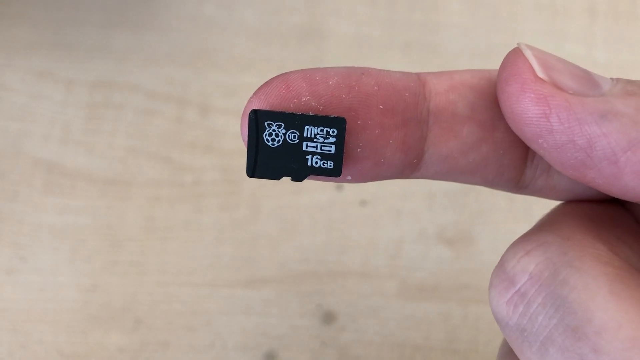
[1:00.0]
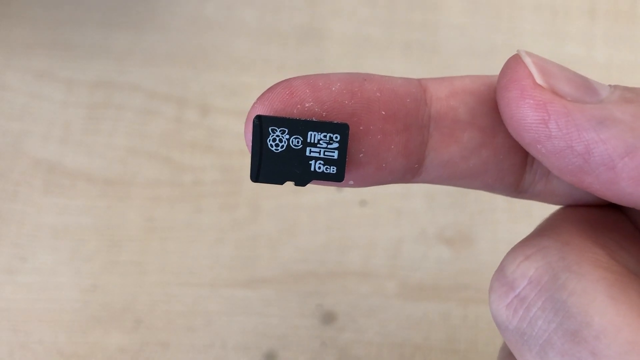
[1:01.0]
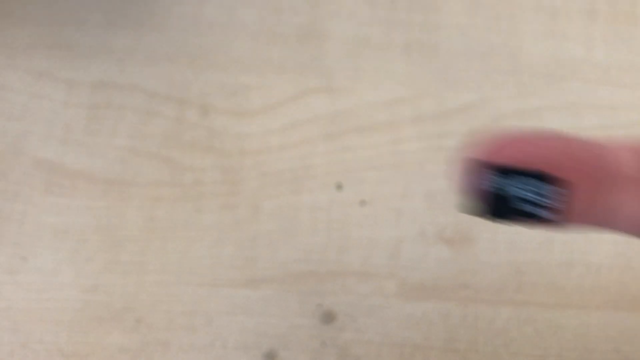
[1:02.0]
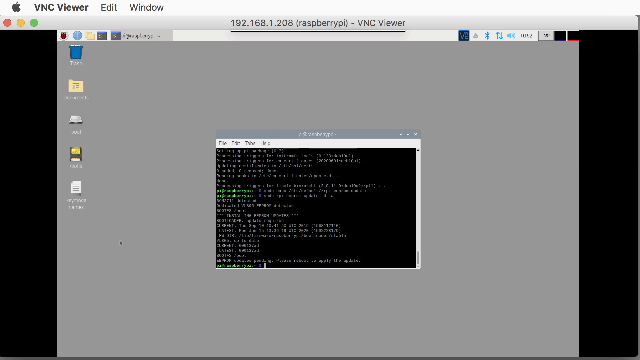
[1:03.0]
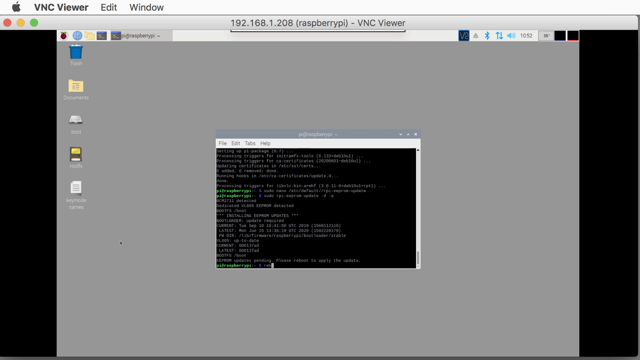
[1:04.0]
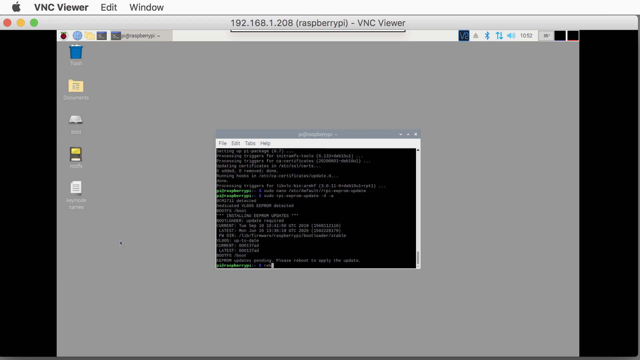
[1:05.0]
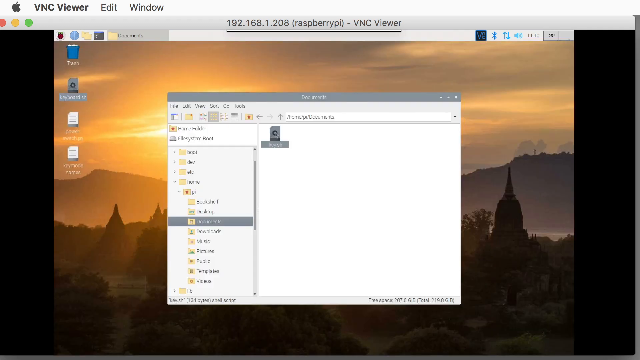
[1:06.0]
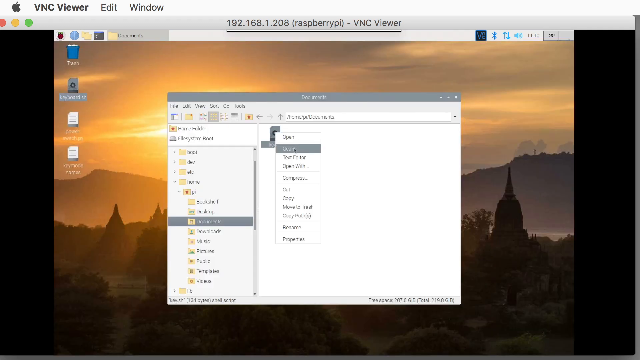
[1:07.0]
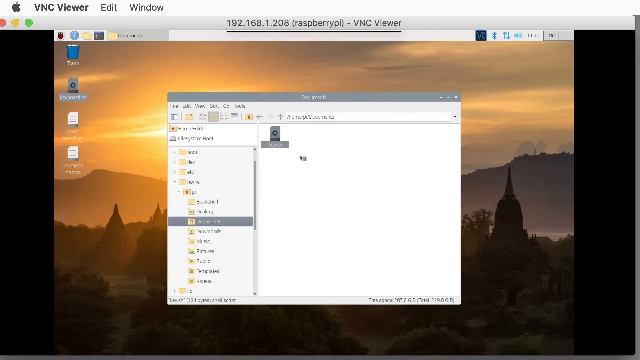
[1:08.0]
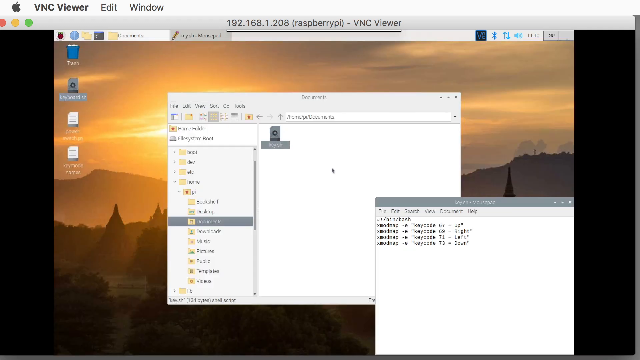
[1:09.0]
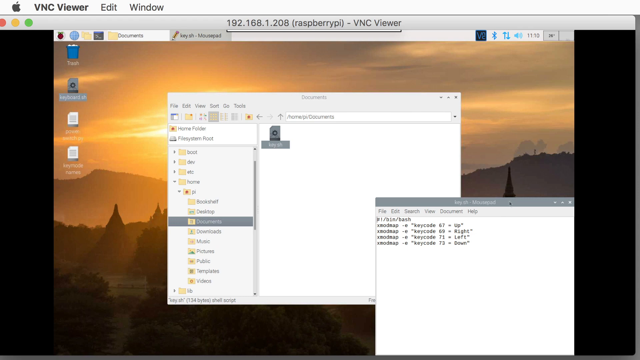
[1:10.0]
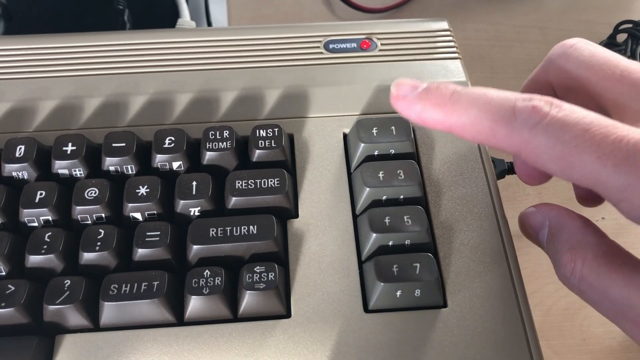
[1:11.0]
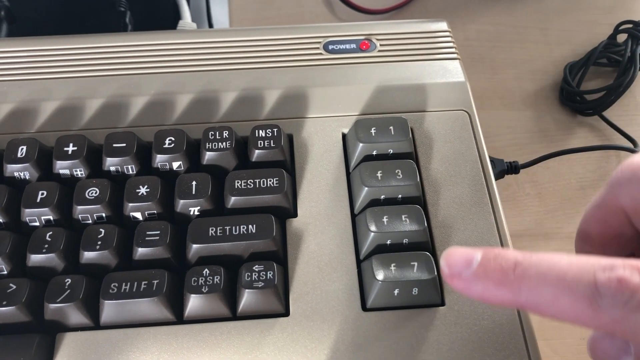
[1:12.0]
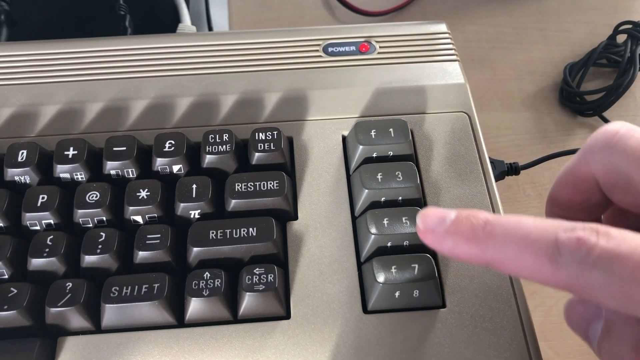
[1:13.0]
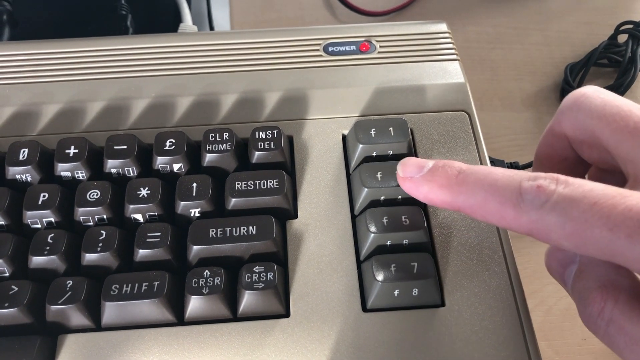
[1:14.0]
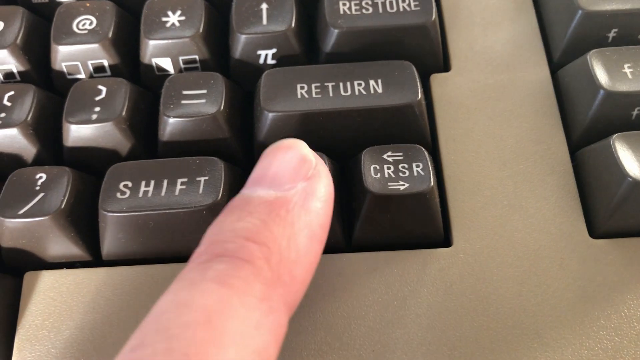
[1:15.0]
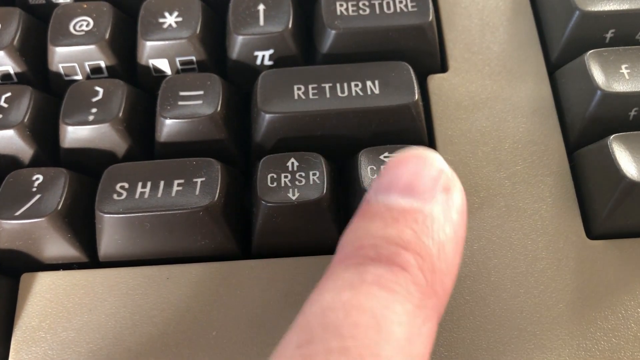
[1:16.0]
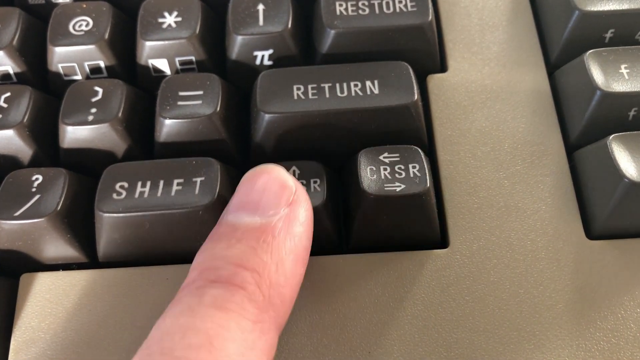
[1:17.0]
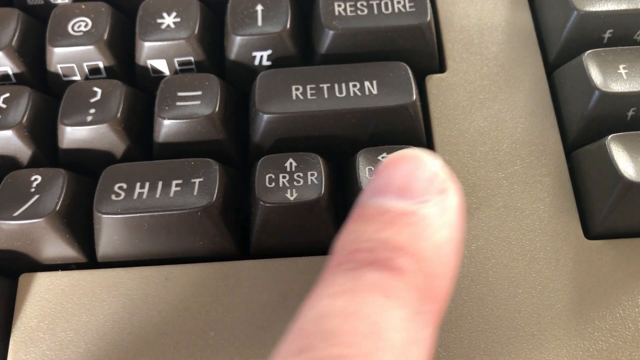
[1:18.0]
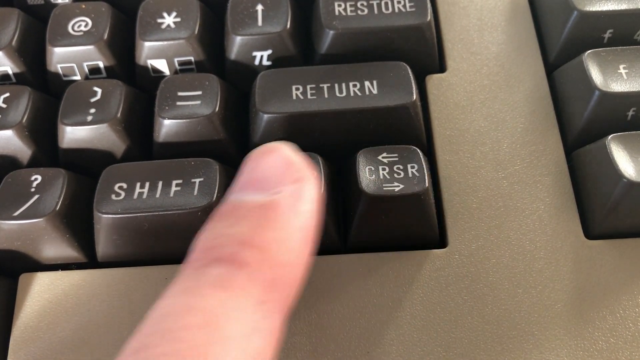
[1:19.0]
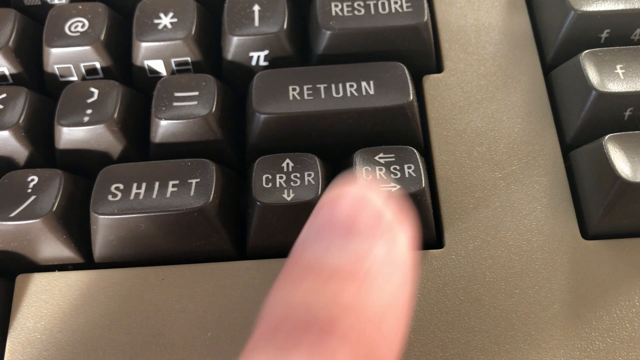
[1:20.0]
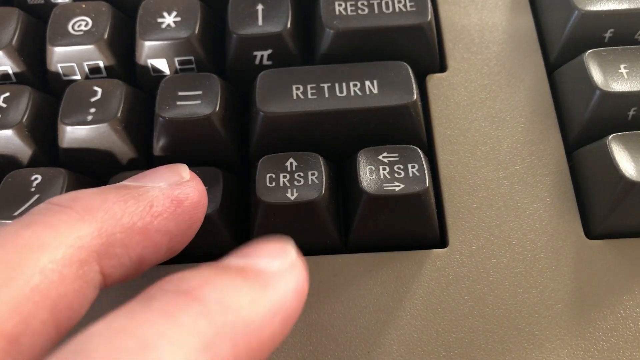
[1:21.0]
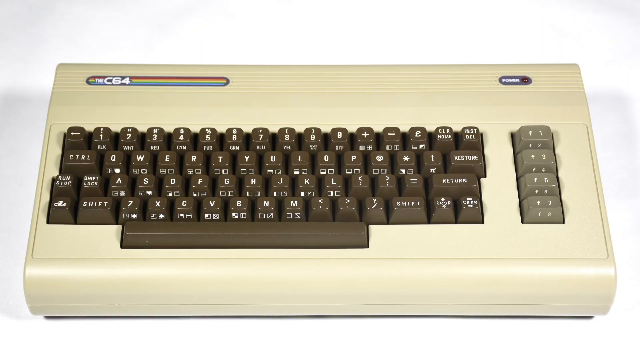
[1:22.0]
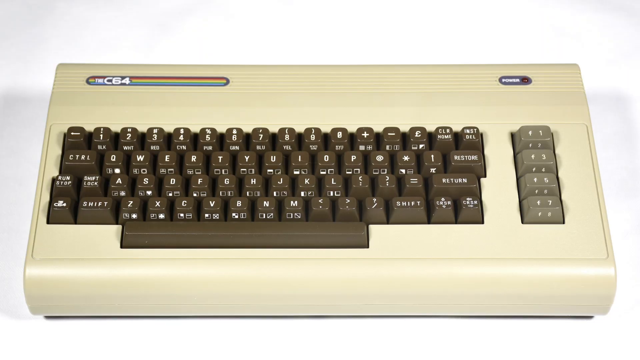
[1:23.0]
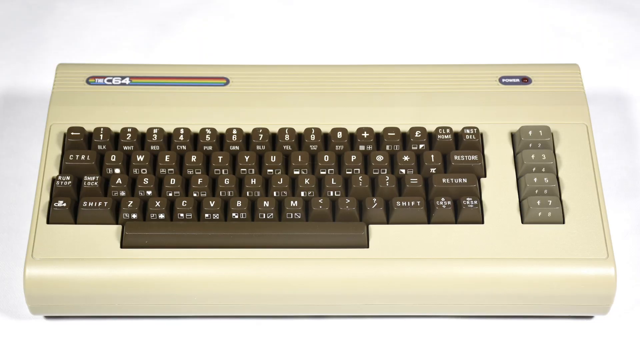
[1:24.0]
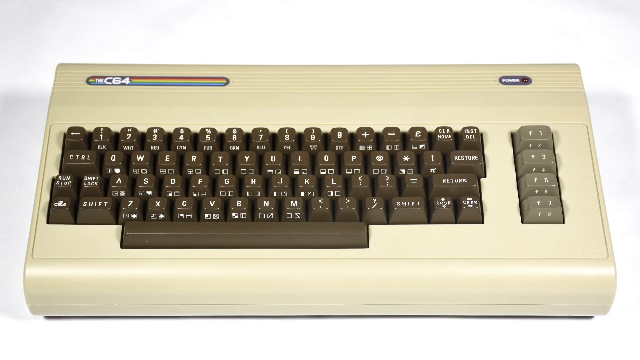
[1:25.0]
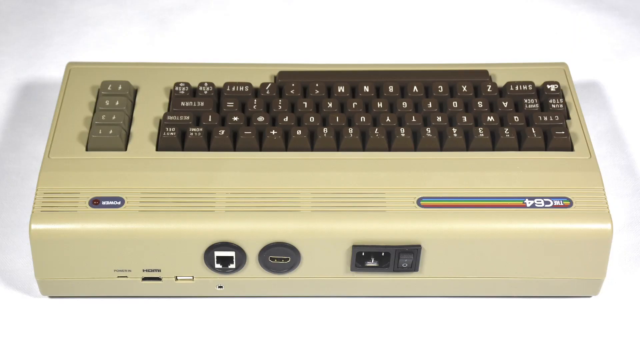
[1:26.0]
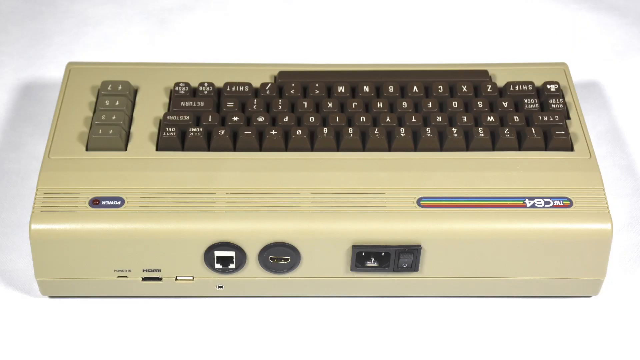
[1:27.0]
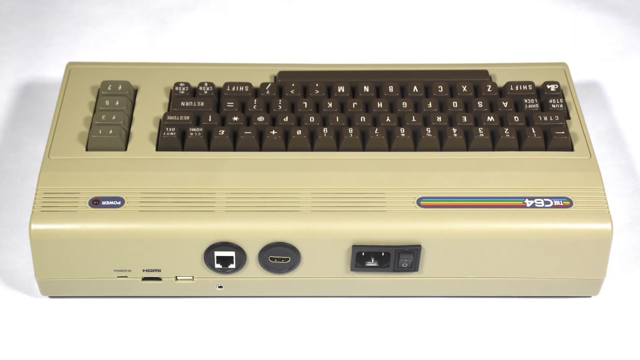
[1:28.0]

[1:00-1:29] Someone holds a microSD card on their fingertip; it has a Raspberry Pi logo and is apparently 16GB. Back on the computer screen, the terminal opens and someone types a command. Another window appears with an icon, and he sends an unclear command involving the icon or file. The video returns to the keyboard, where the person points out a set of four brown or gray buttons on the right of the keyboard: F1, F3, F5 and F7. The person presses F1, then F7, then F3. Next the person holds down buttons in the main keyboard section: two buttons both labeled CRSR, one showing arrows pointing up and down and the other showing arrows pointing left and right. The person then presses the shift button and holds the up-and-down CRSR button. Finally the entire keyboard is shown from the front and then from the back.